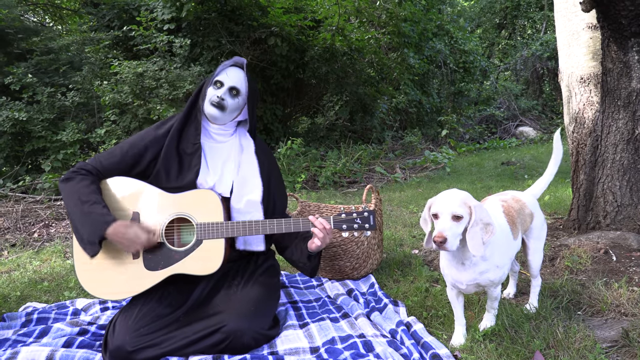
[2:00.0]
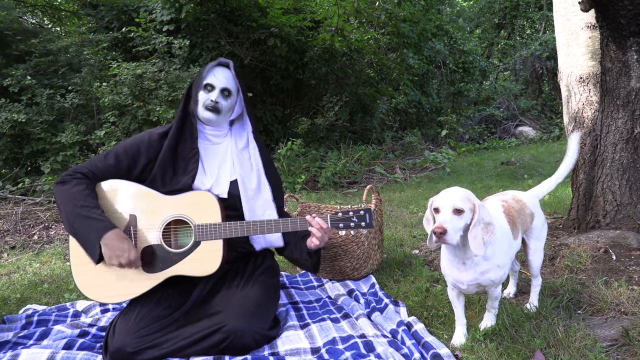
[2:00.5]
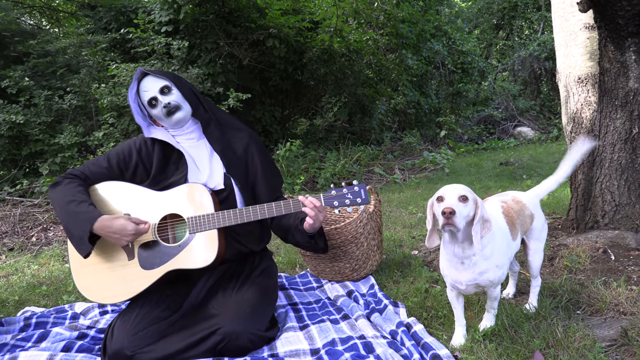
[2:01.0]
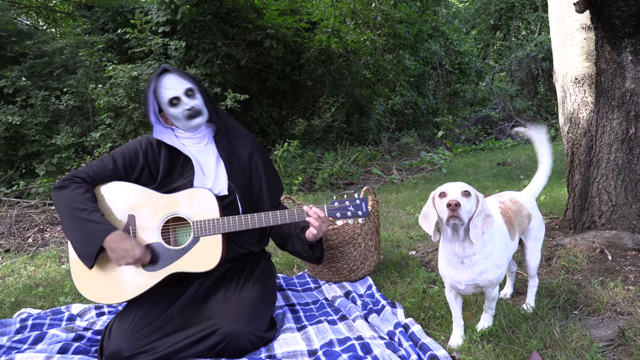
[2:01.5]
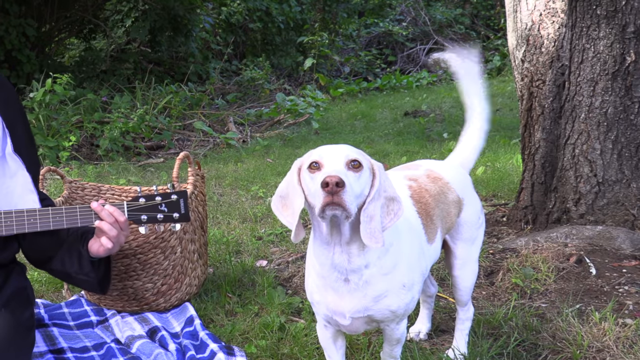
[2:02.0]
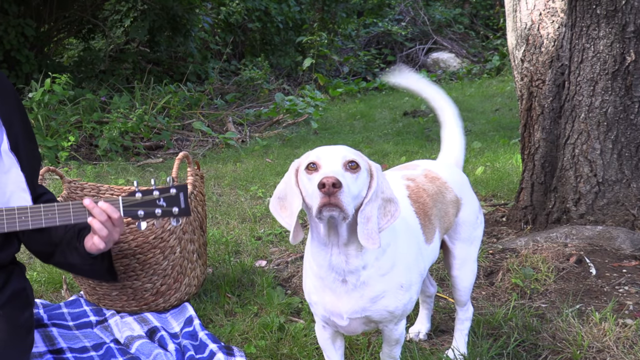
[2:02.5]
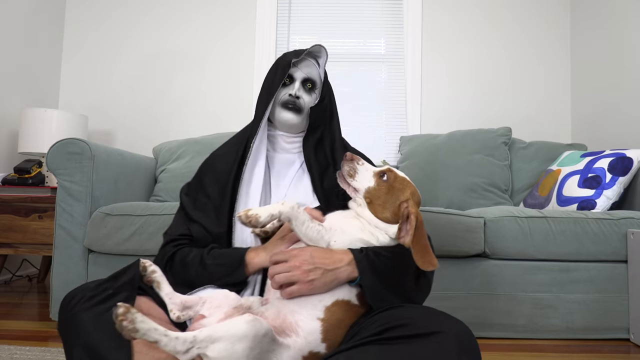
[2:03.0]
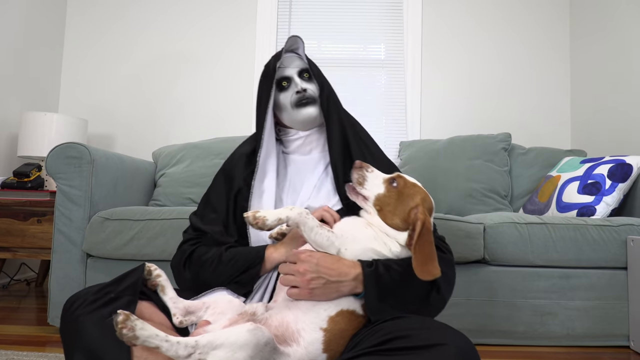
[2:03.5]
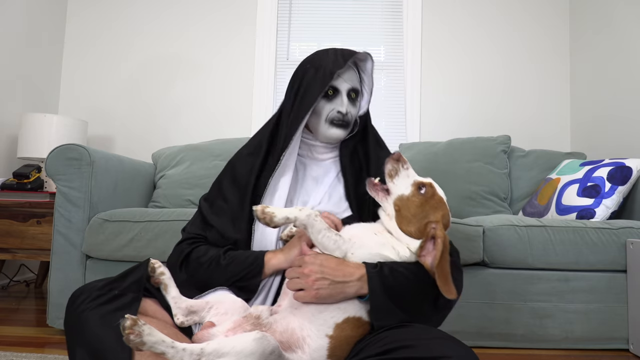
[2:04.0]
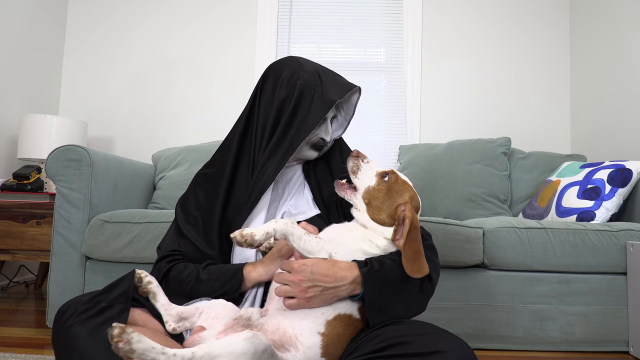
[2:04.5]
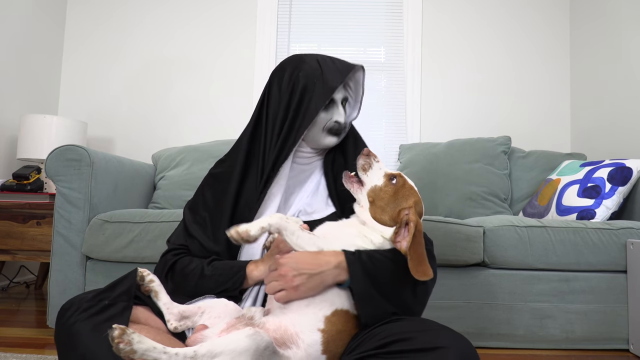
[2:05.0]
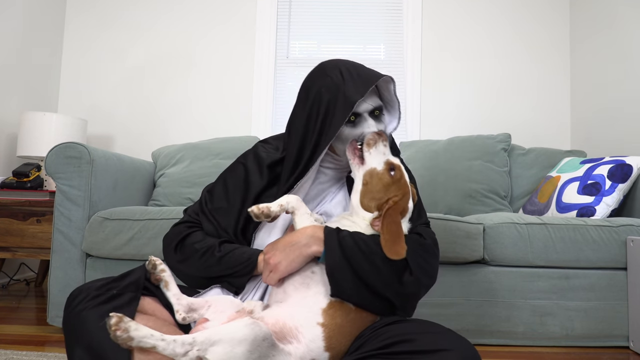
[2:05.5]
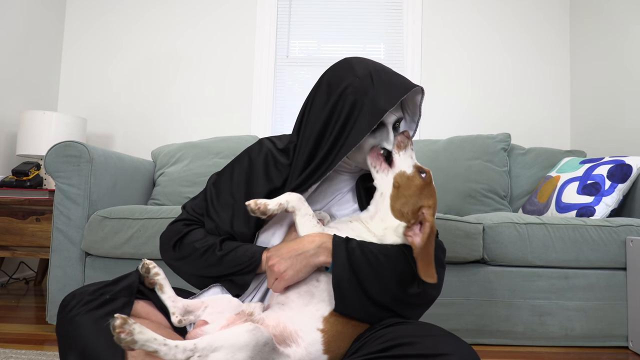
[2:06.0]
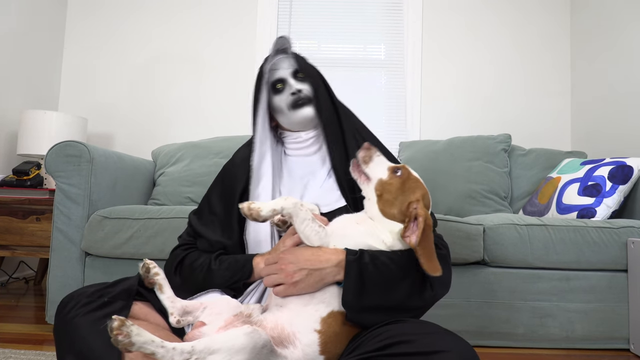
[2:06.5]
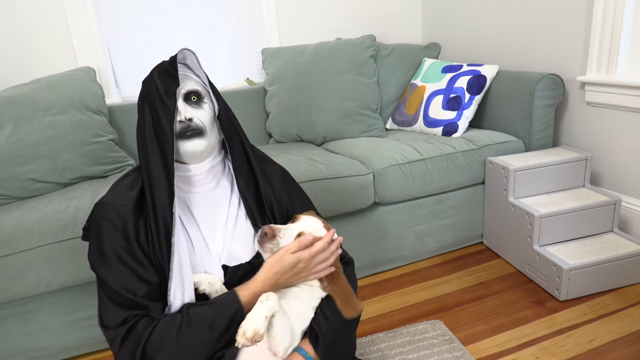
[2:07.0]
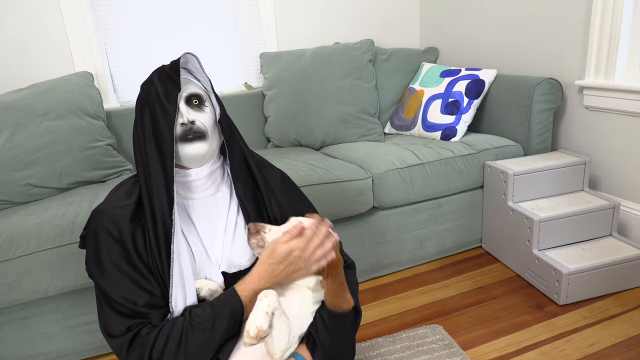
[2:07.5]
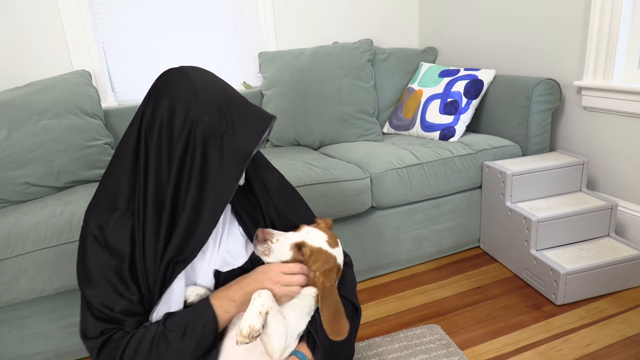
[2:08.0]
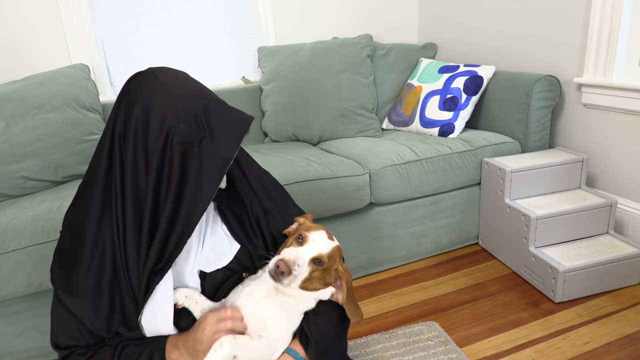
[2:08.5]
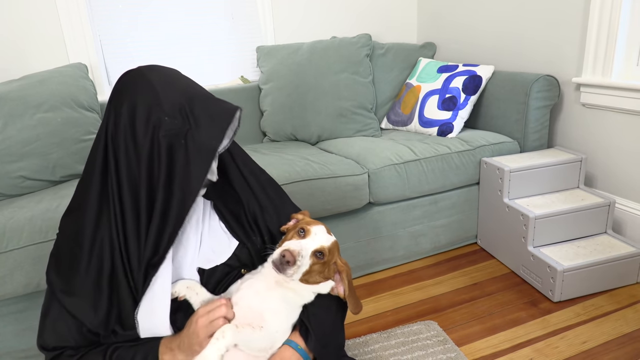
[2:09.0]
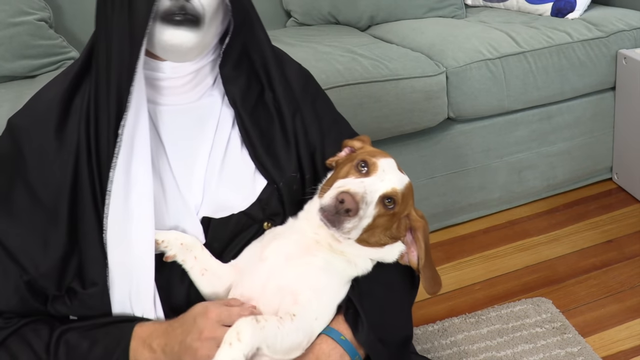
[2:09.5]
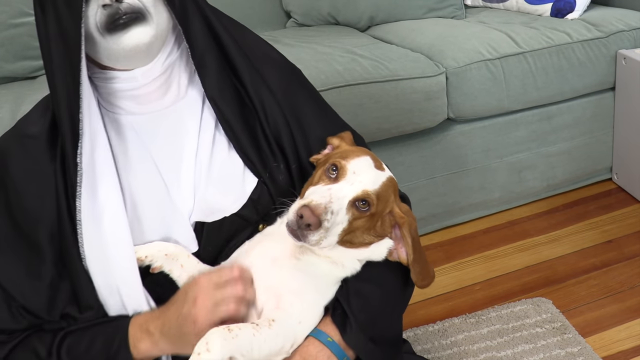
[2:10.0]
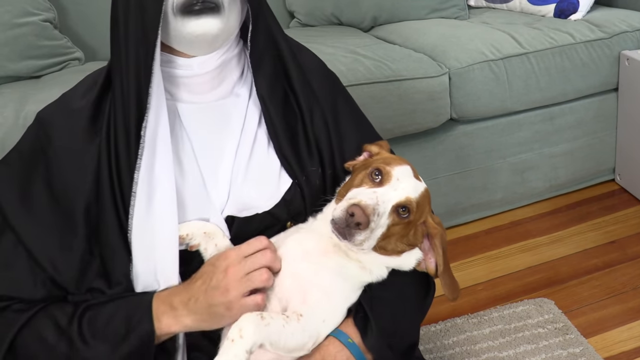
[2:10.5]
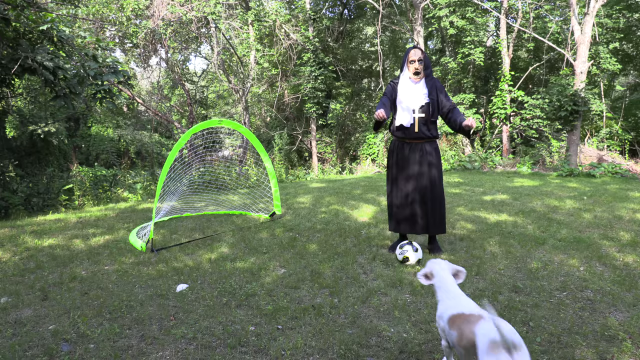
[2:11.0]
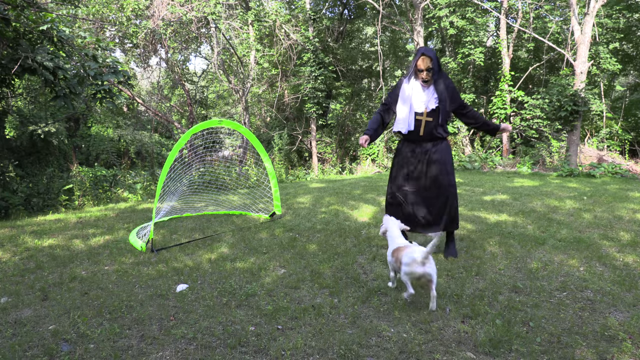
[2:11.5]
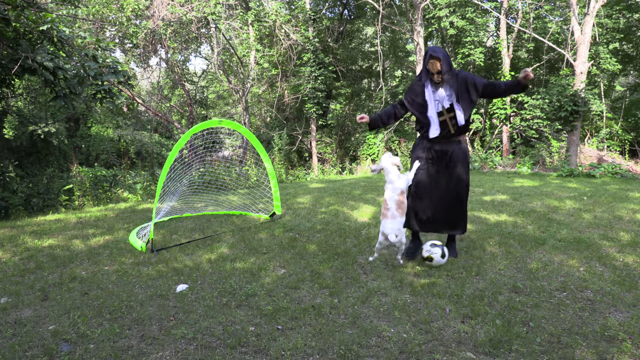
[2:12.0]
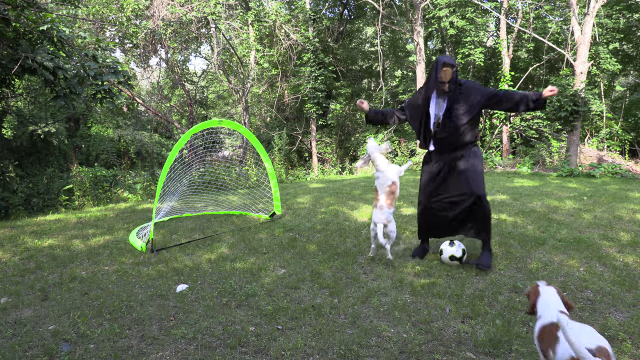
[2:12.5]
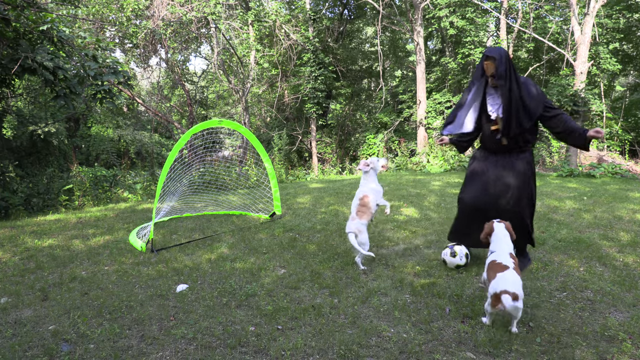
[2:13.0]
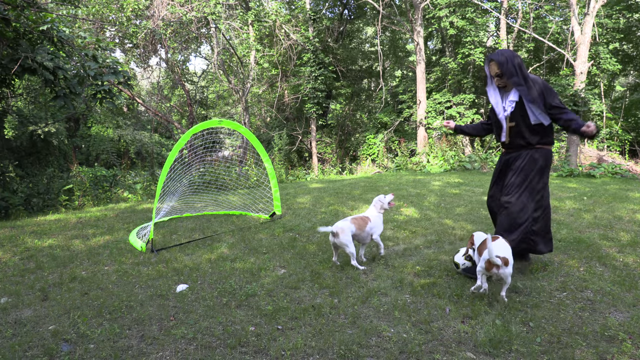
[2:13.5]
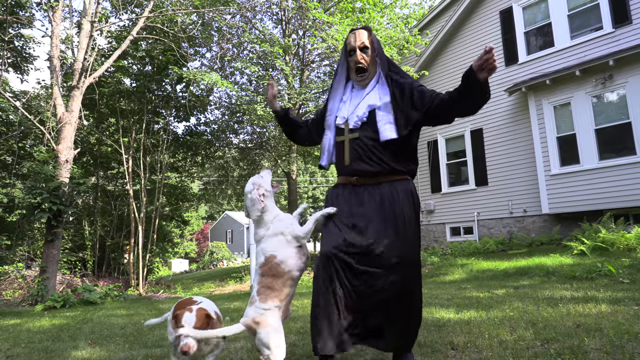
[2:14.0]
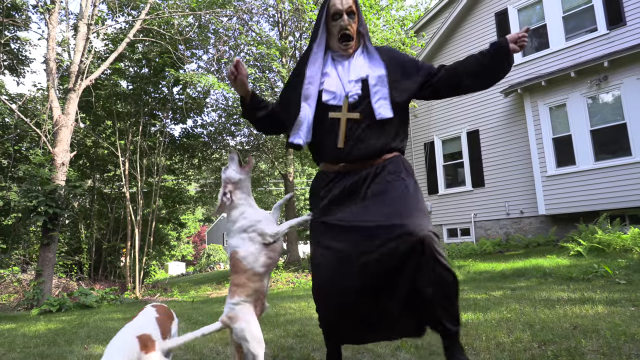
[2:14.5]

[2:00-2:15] The demon nun continues to enthusiastically play his guitar while the dog with white floppy ears looks at the camera, wagging his tail. The shot cuts inside the house, where the demon nun is sitting on the floor in front of the green sofa, which has a white pillow on the right with blue, green, grey and yellow abstract shapes. The demon nun is holding the dog with brown floppy ears, tickling his tummy and trying to kiss him. The dog looks moderately comfortable, though the demon nun seems to be having a better time. Then the shot cuts outside, where the demon nun is playing soccer with all three dogs on the lawn, with a green soccer goalie net and a black and white soccer ball.